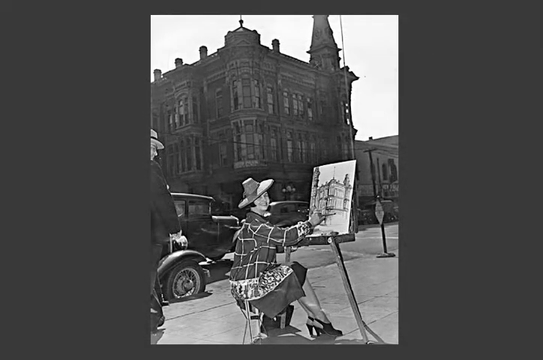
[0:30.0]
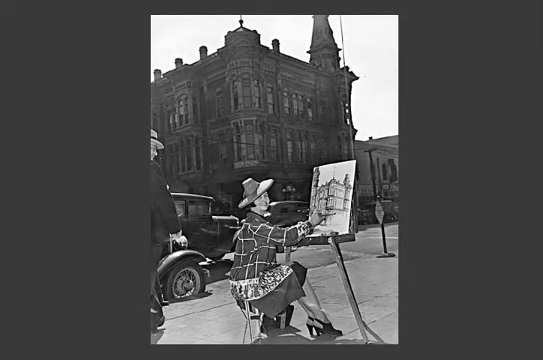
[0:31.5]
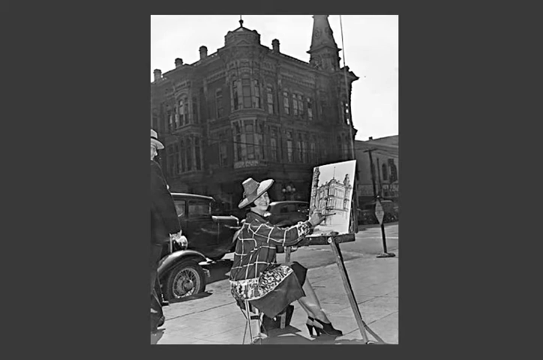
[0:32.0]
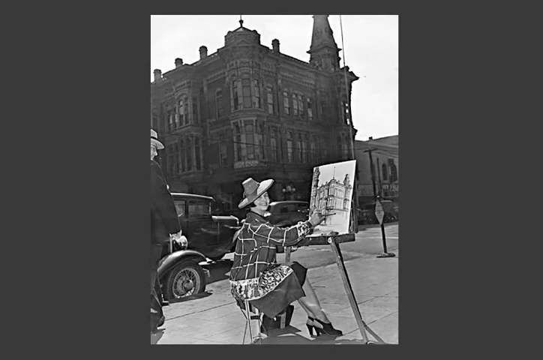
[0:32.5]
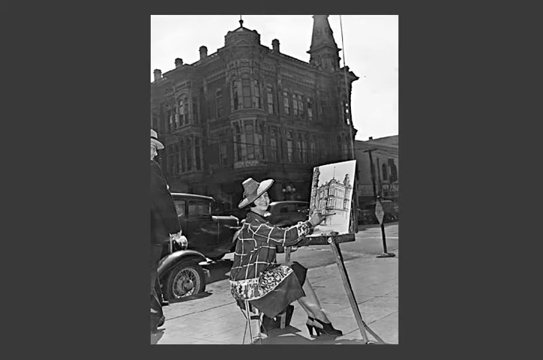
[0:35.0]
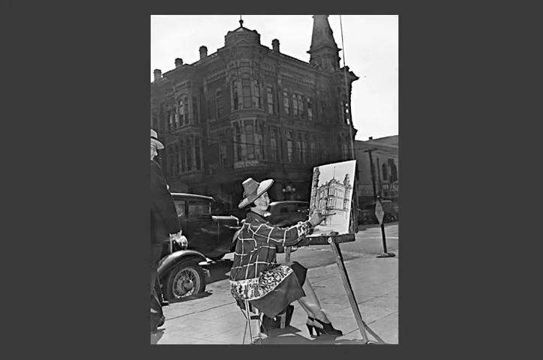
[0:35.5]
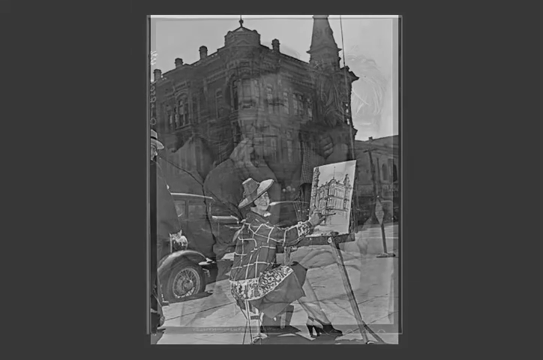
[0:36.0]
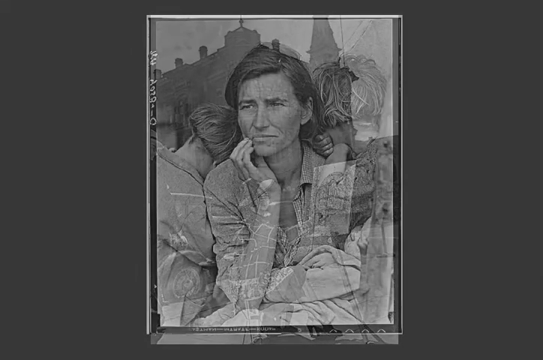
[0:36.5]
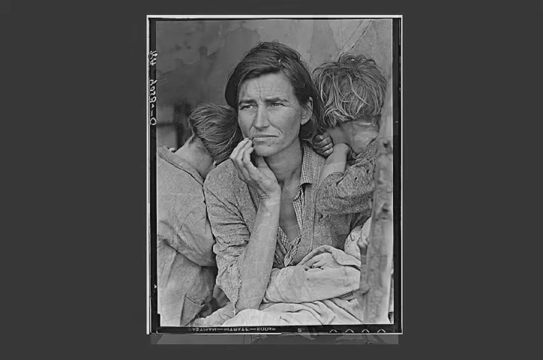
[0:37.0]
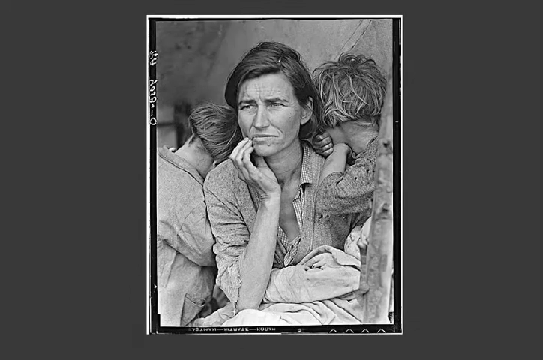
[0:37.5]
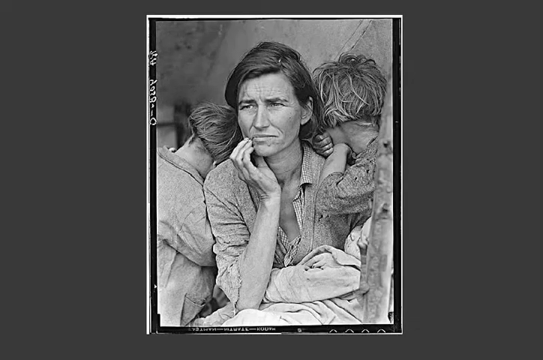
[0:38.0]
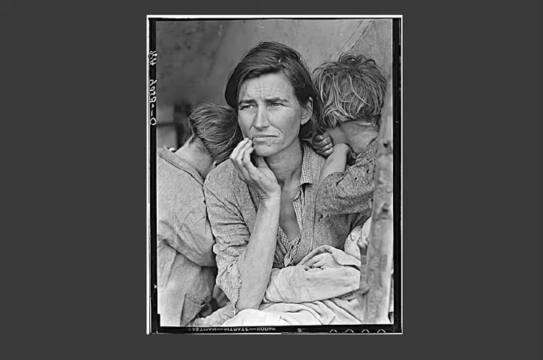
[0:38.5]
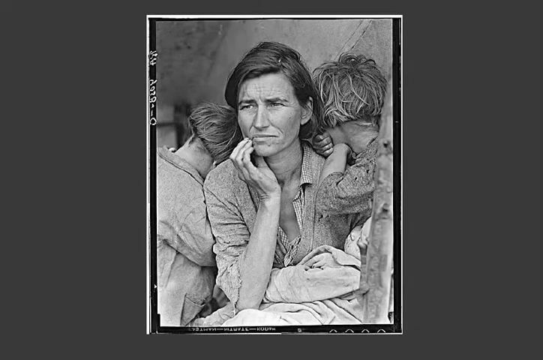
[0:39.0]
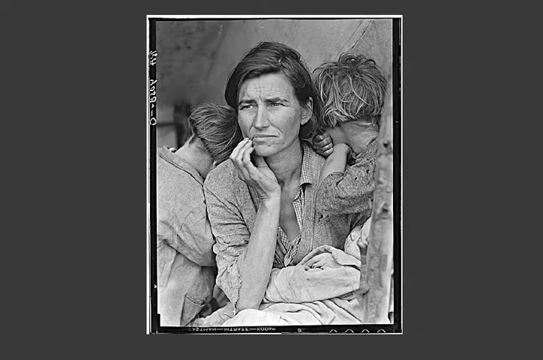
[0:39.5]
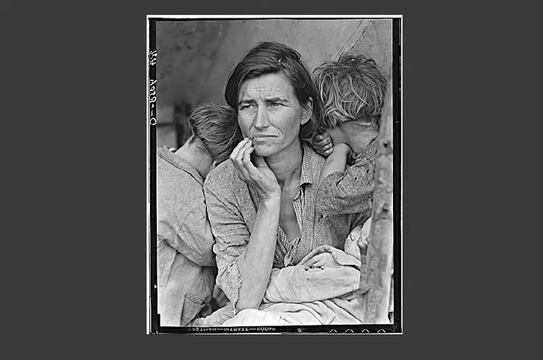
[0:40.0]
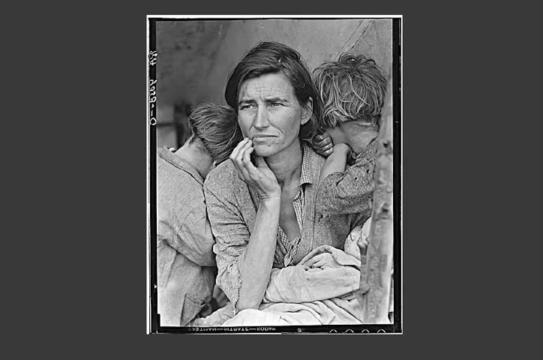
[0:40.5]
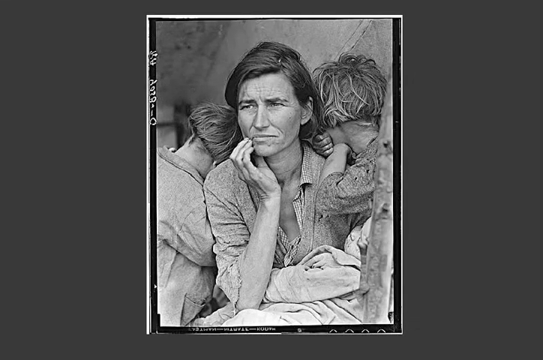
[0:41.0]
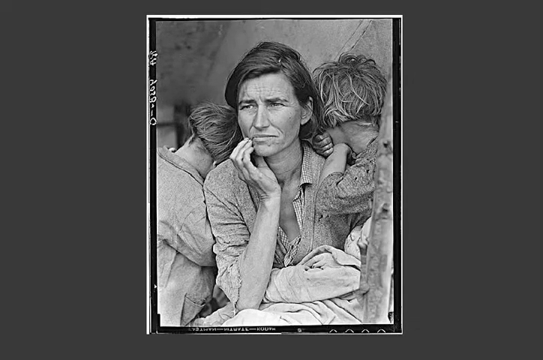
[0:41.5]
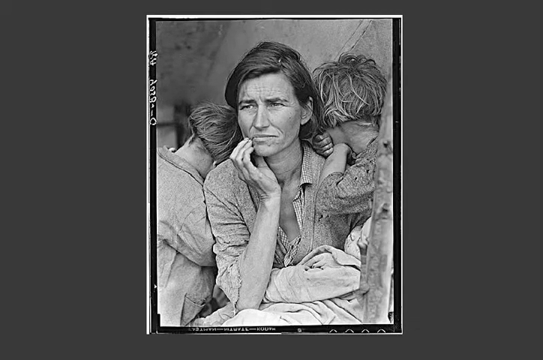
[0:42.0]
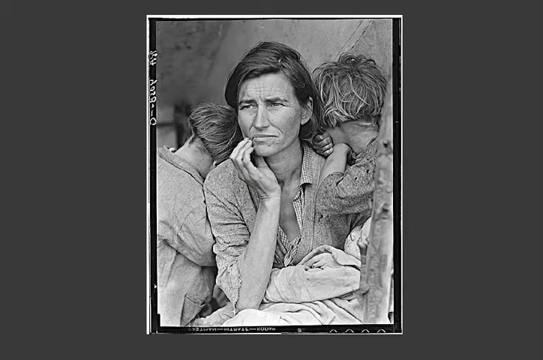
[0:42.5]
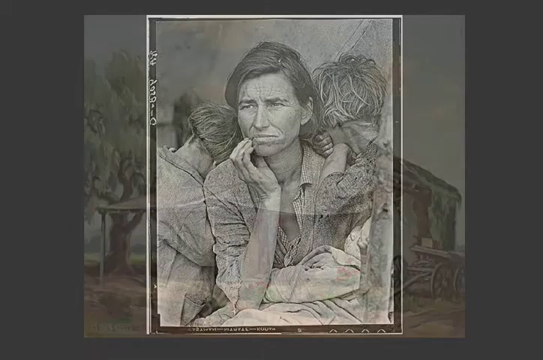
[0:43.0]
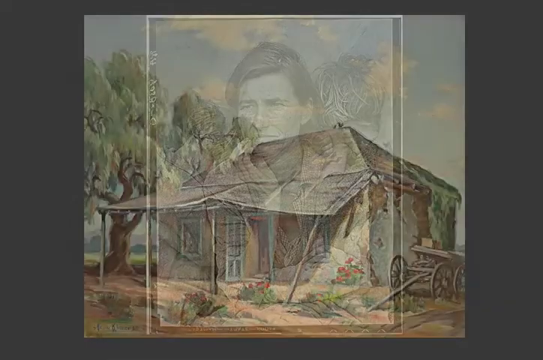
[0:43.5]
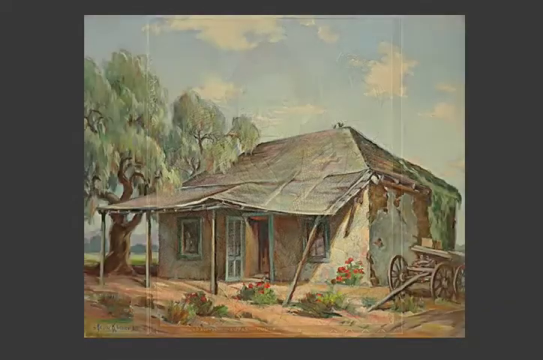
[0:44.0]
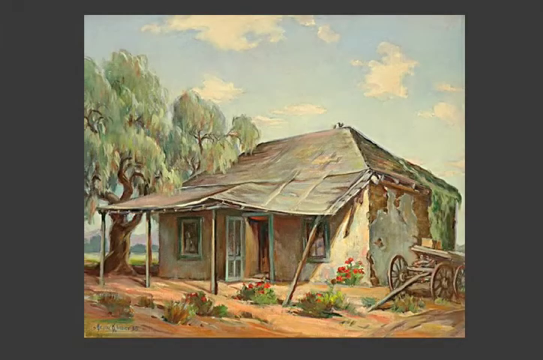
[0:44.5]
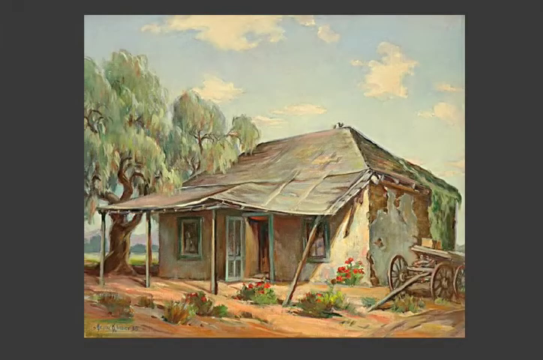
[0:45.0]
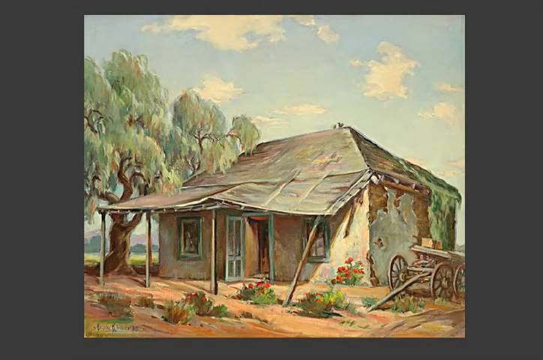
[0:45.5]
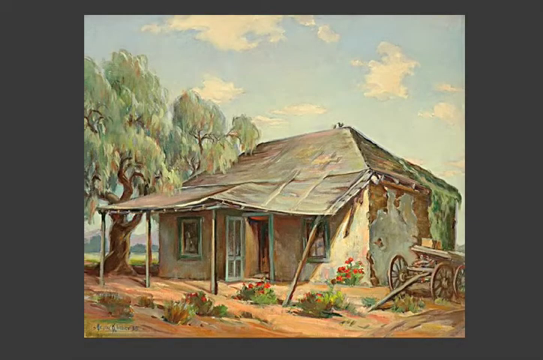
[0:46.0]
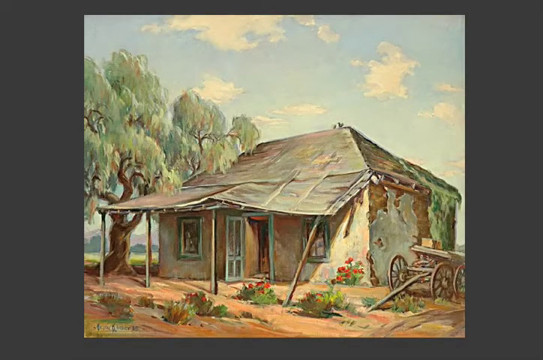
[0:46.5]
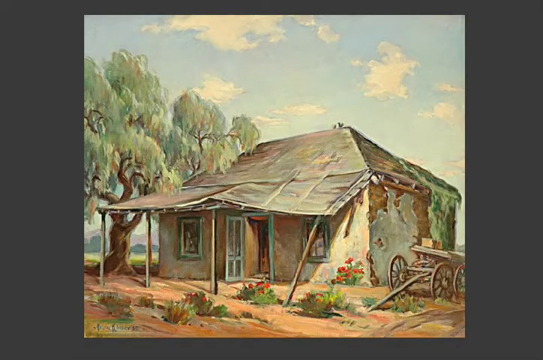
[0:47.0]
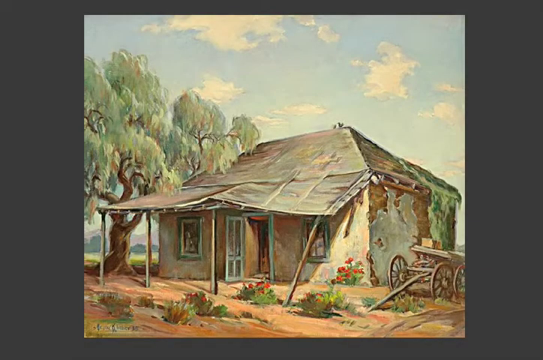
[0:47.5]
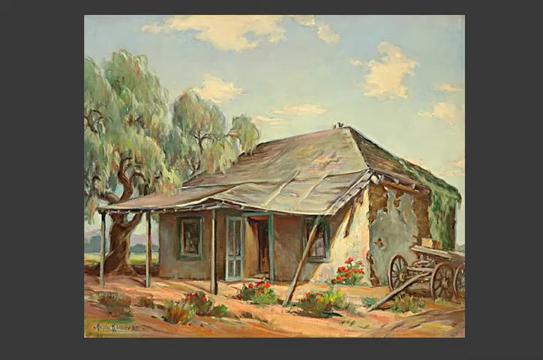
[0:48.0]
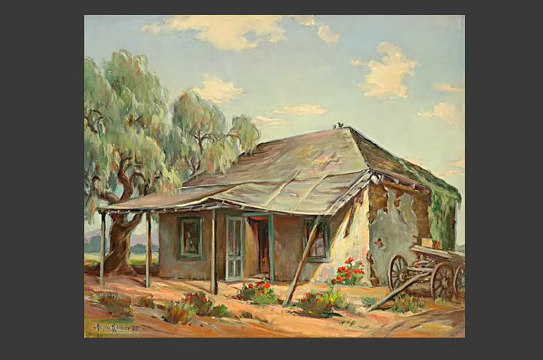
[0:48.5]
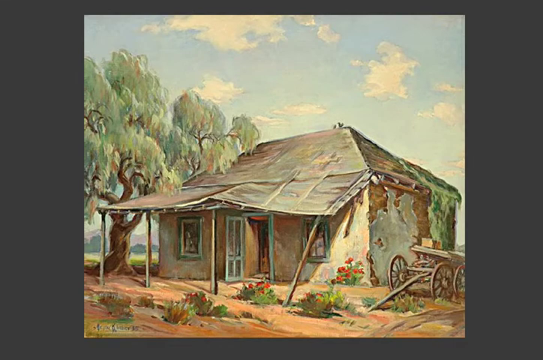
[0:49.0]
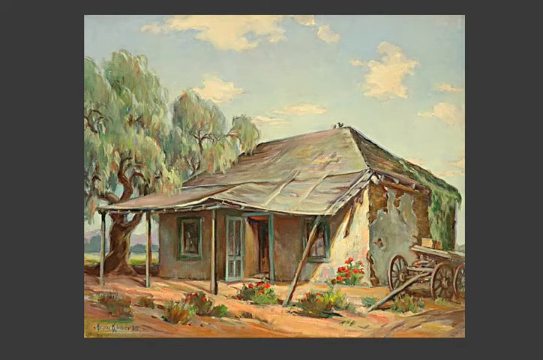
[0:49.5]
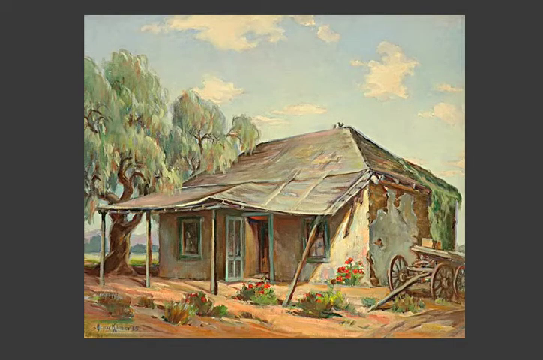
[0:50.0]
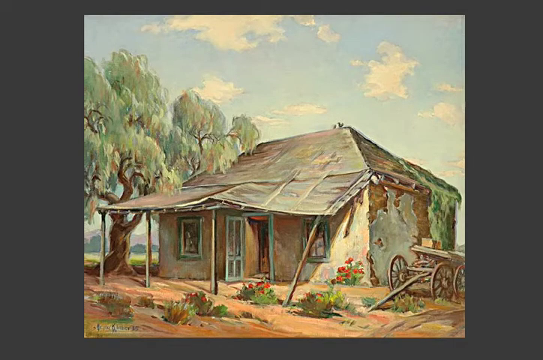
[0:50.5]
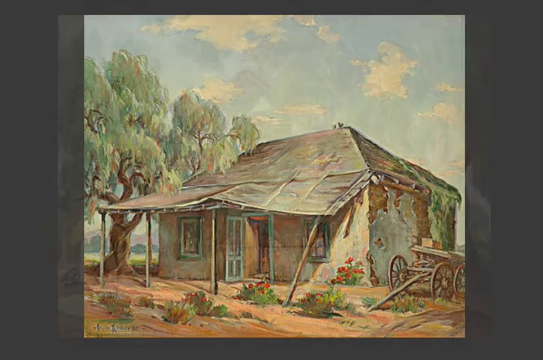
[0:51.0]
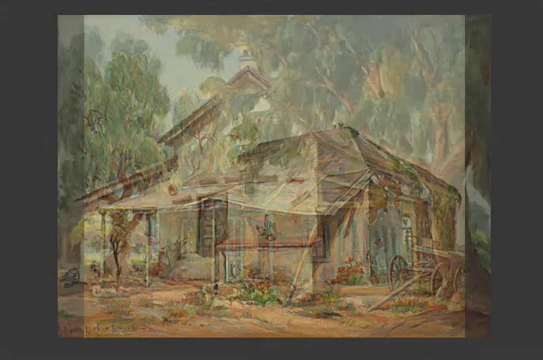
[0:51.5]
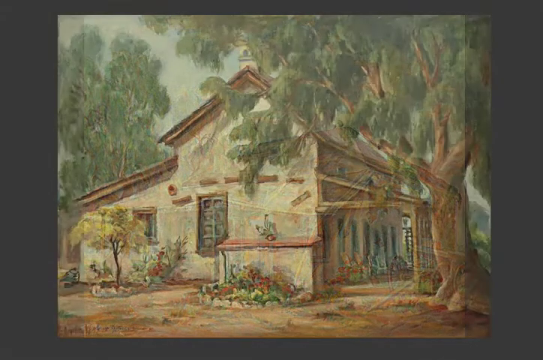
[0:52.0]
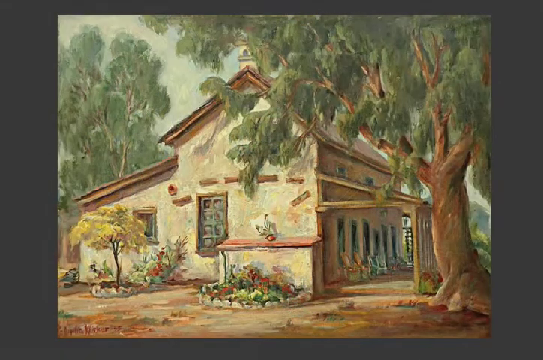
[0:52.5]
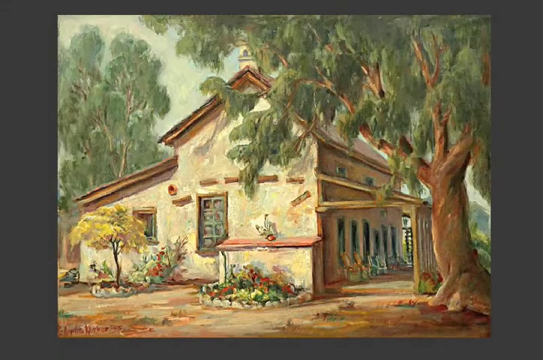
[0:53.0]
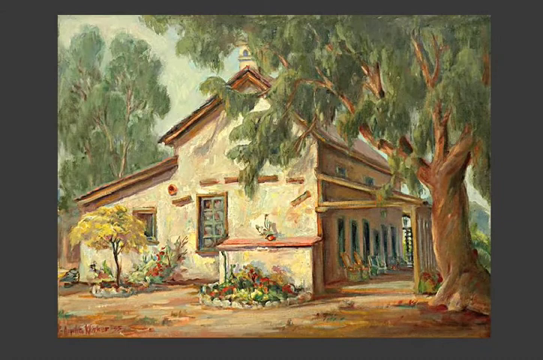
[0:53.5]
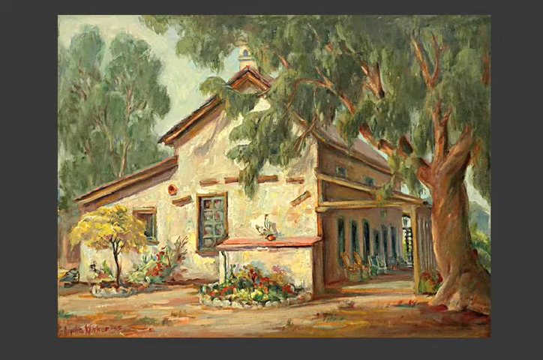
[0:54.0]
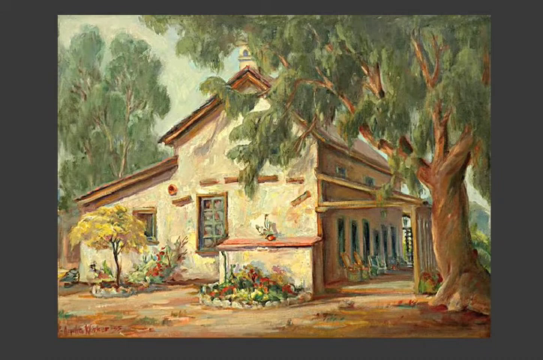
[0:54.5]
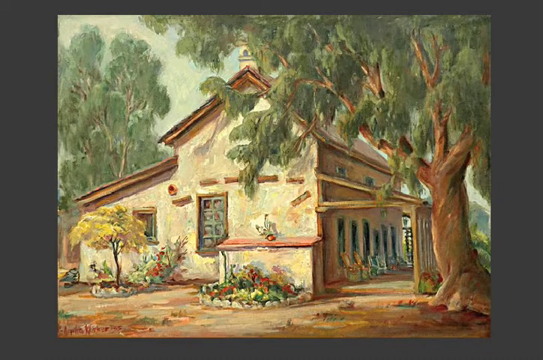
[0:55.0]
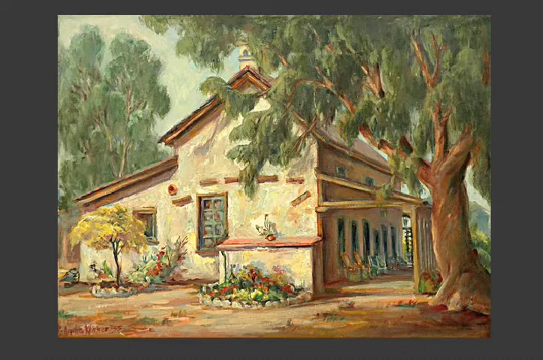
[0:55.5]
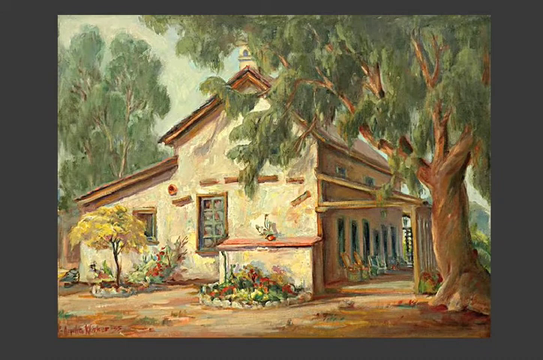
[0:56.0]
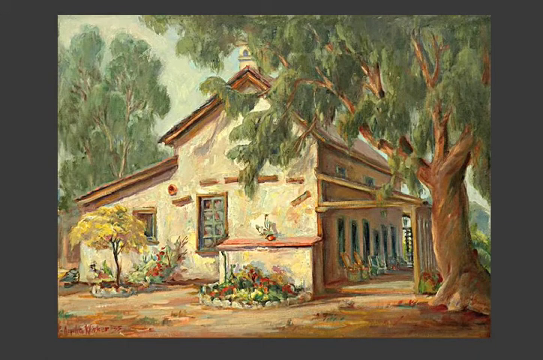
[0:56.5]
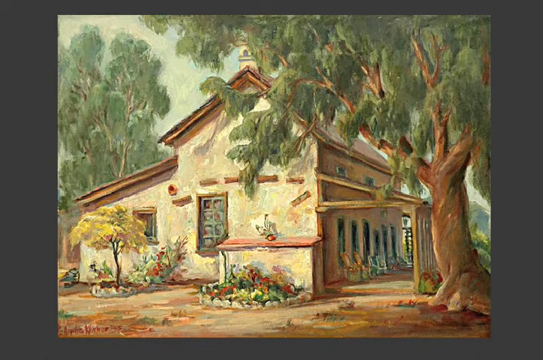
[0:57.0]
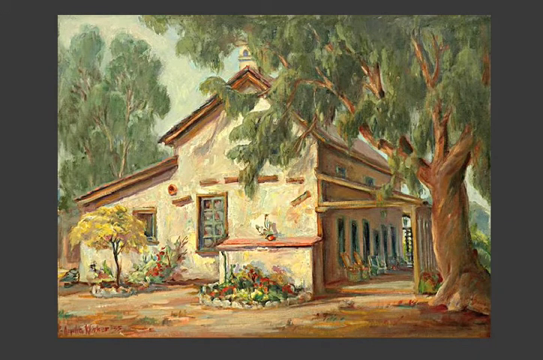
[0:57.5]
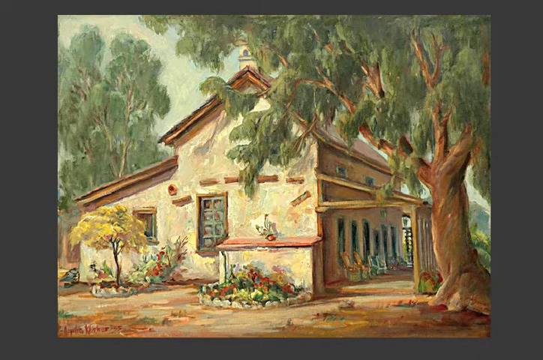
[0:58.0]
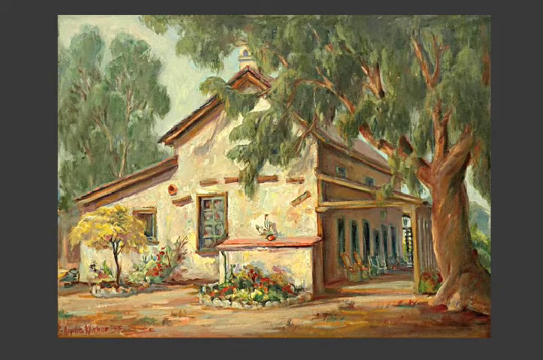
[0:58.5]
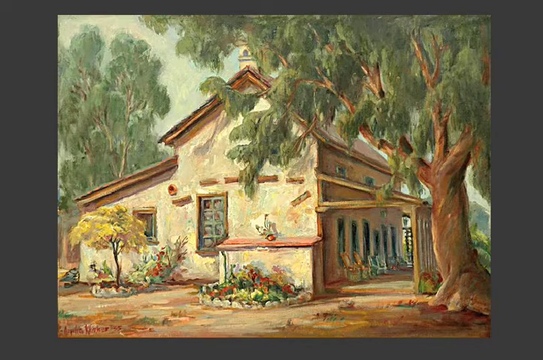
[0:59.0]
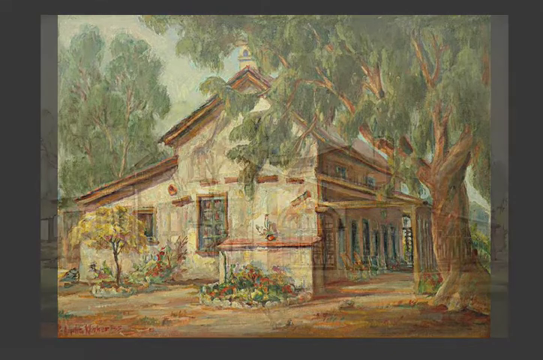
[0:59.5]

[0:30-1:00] Over a gray background is a picture from the 1920s, maybe early 30s, of a woman sitting on a sidewalk painting a picture of a cathedral. The cathedral is across the street, and there seem to be Model Ts behind her and a man walking in the background. This image is replaced with the famous and iconic picture Migrant Mother, showing a lady with a bobbed haircut and her head in her hand, her two children facing away from the camera but hugging both sides of her; she looks extremely upset. The next image seems to be a painting of a shack on a field somewhere. The shack has a deck held up by pillars. There is a tree on the left-hand side that looks like a willow from how it is painted, and the back of the house is moss-covered. There also seems to be a vehicle on the side of the building. That is replaced with another painting, of a nicer beige house with a tree to the side and beautiful windows. It seems to have flower gardens and a porch with multiple rocking chairs sitting on it.